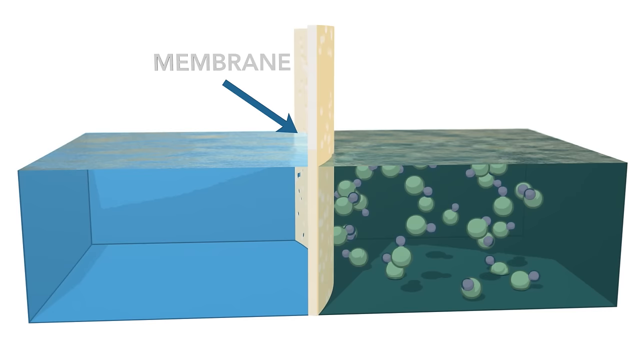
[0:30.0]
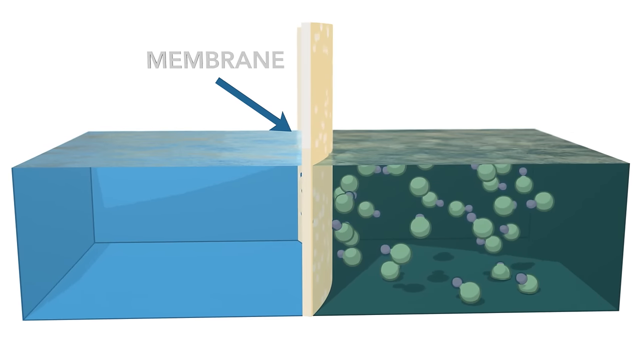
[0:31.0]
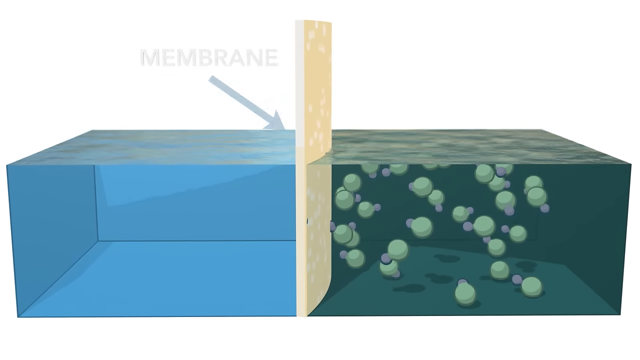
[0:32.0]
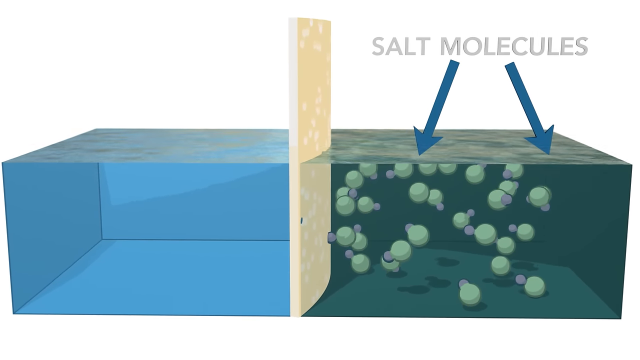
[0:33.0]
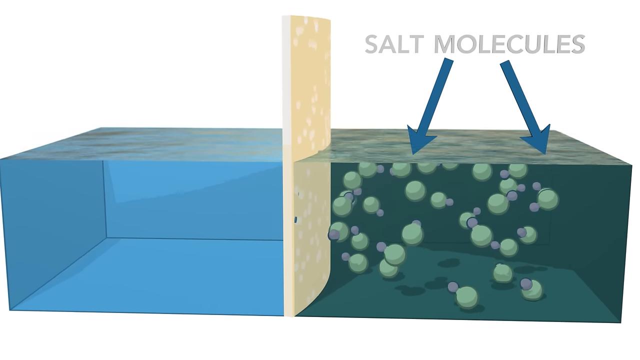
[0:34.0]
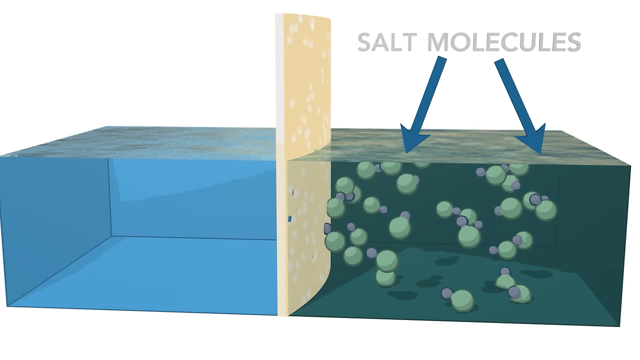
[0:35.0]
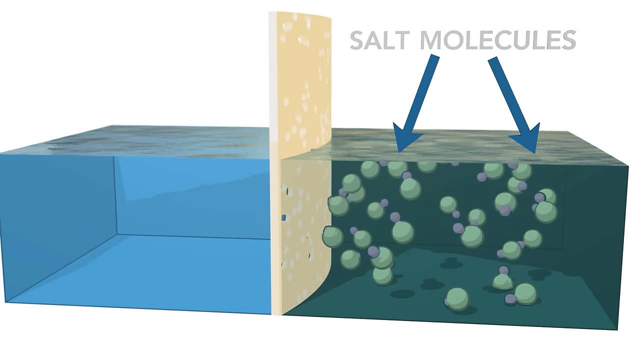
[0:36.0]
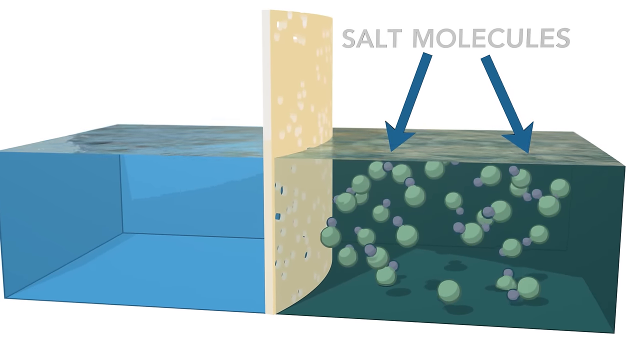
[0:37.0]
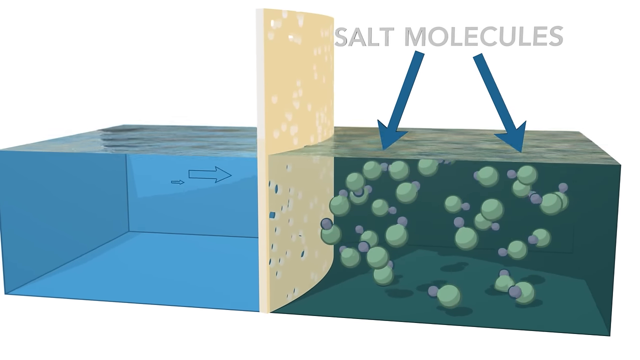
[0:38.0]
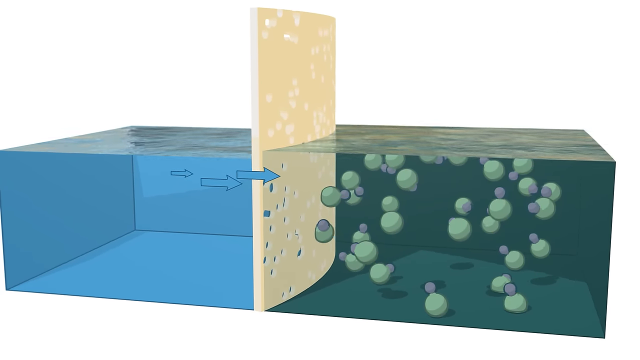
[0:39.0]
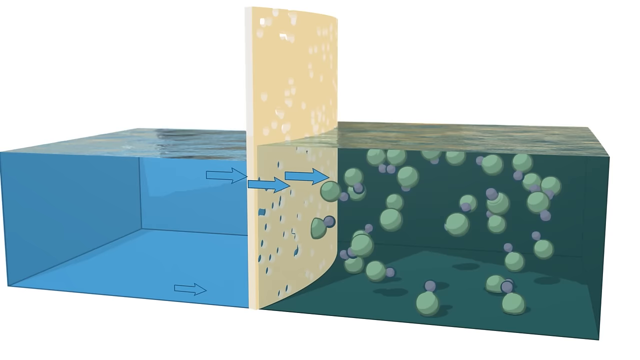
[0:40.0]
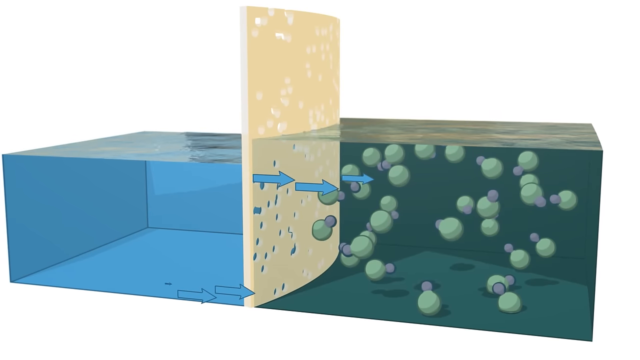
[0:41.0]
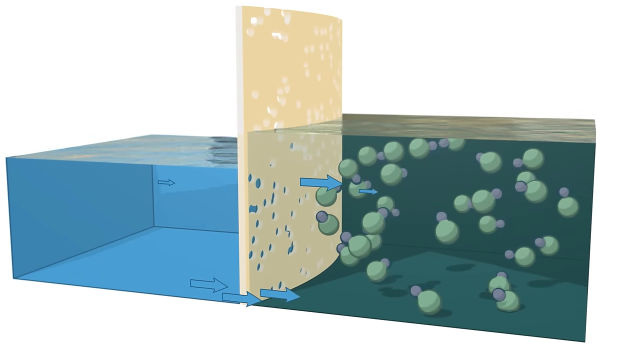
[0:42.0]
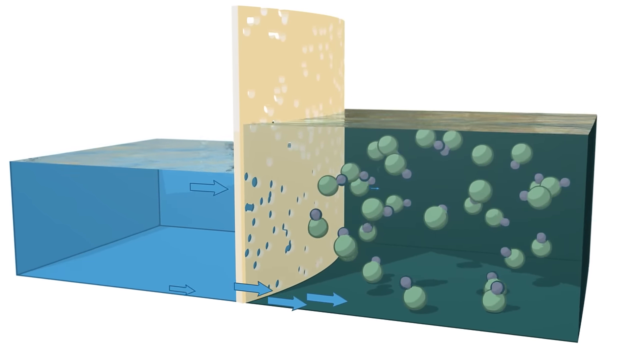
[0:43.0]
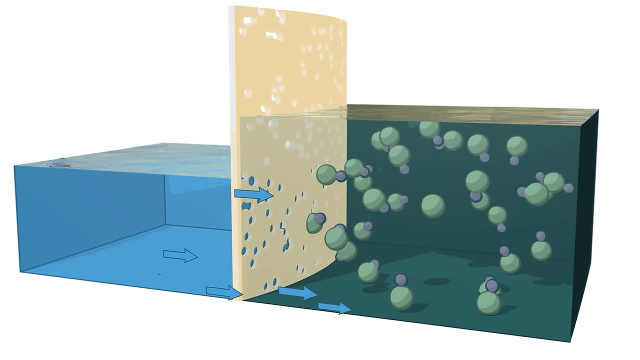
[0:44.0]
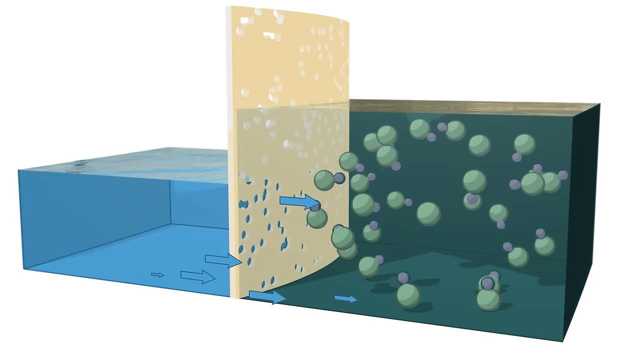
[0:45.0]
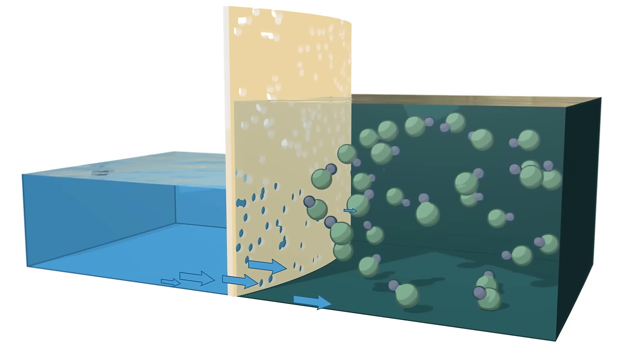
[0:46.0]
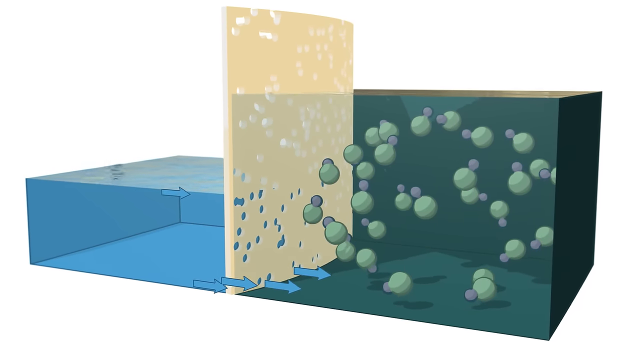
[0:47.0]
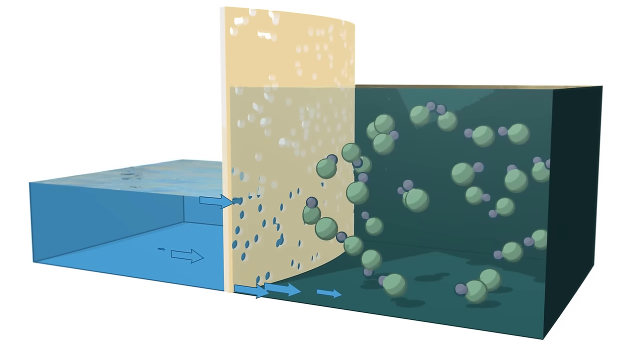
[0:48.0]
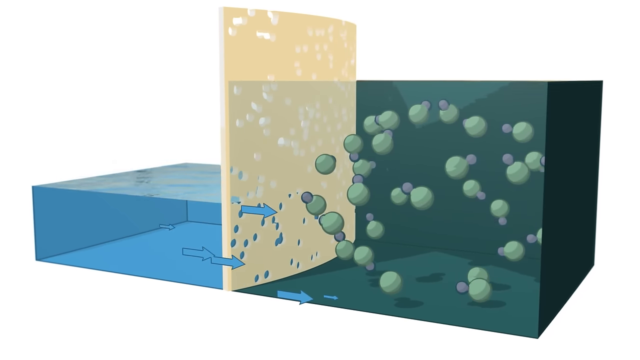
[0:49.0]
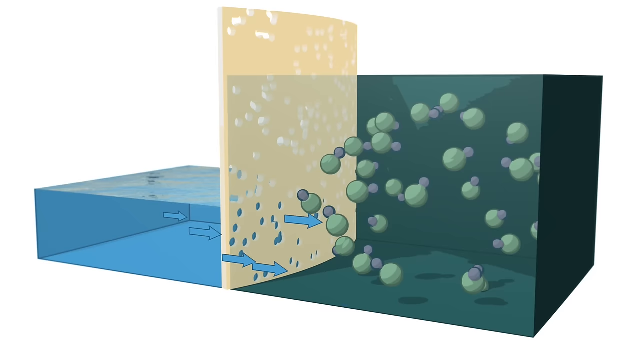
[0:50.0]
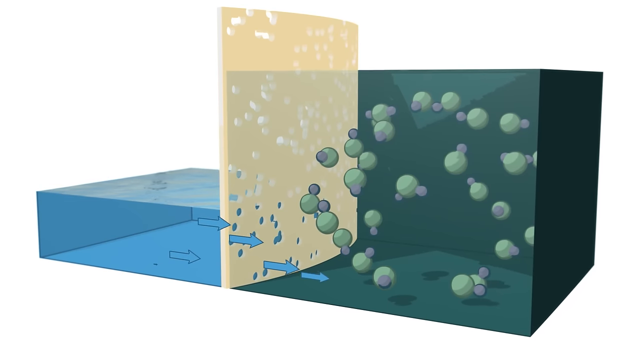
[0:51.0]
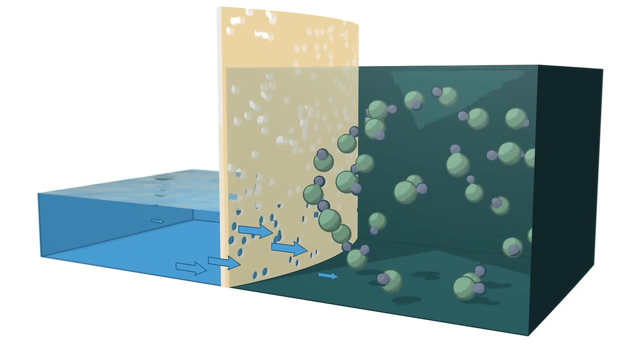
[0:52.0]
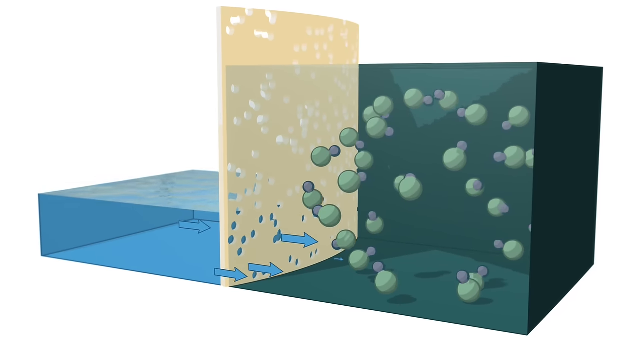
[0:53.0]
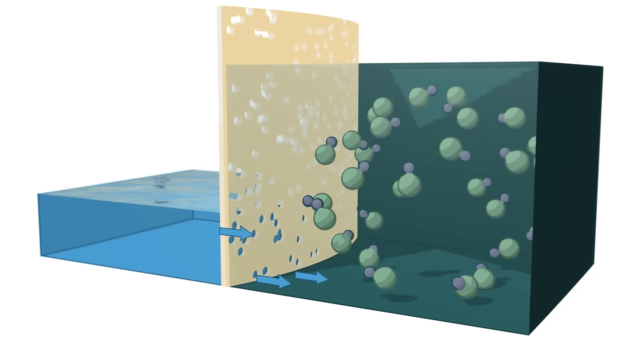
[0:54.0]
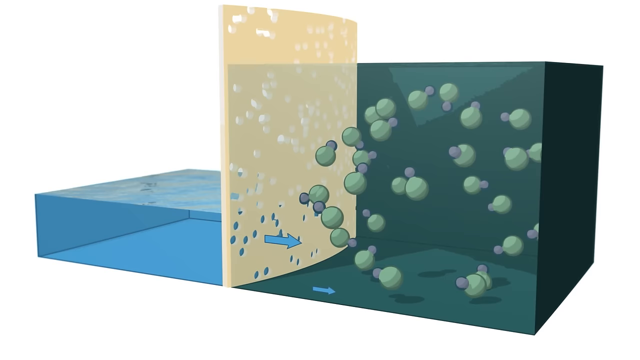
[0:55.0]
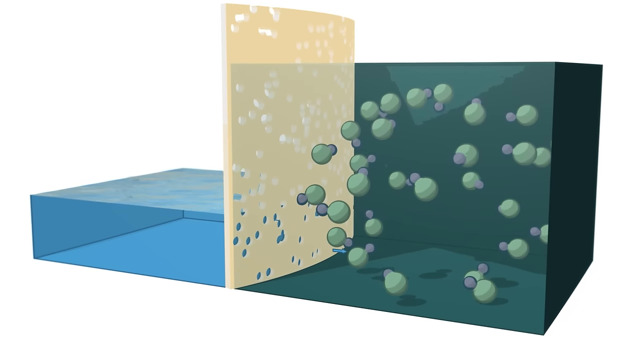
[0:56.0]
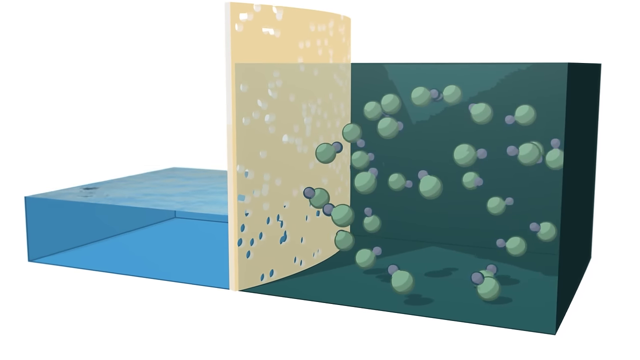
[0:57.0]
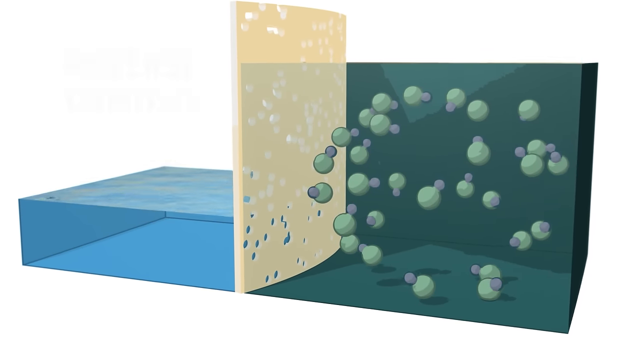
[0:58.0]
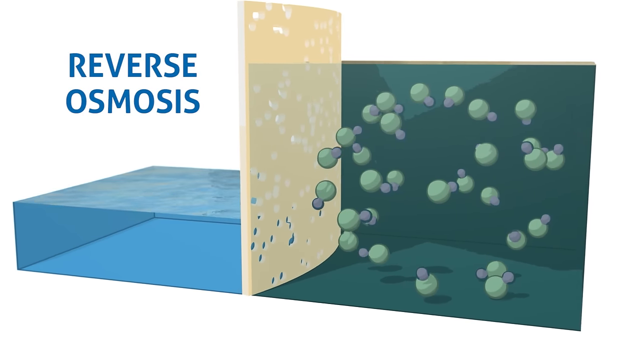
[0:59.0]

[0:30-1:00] The yellow membrane, which has some holes in its surface, is labeled and separates a clear blue water section on the left from a green water section on the right. The membrane's label goes away, and the view zooms in on the green section as the camera starts to rotate to the right. The salt molecules become labeled, with two blue arrows pointing to the green circles inside the green liquid, and then that text disappears as well. Blue arrows start to point from the blue section through the membrane toward the green section and float into it. The green section of water rises much higher while the clear blue section decreases and goes lower. The process continues, with blue arrows flowing from the blue section into the water filled with salt molecules. Toward the end, text comes up that says "reverse osmosis".